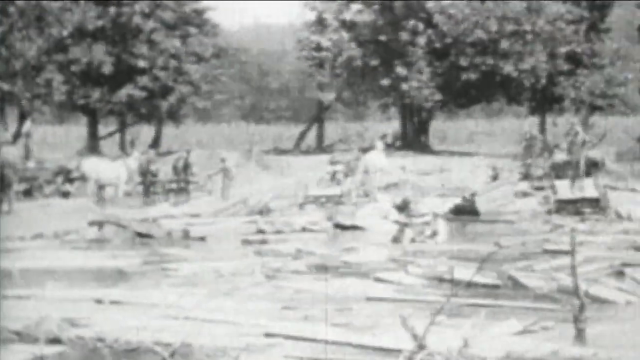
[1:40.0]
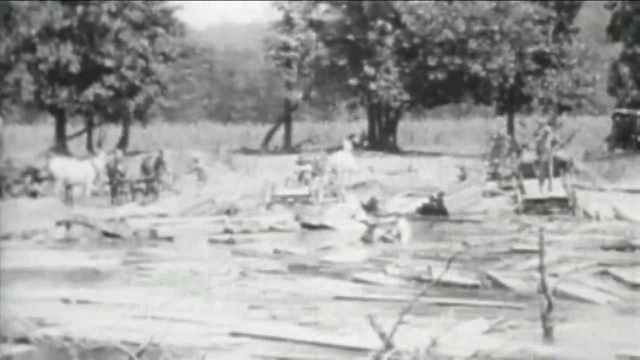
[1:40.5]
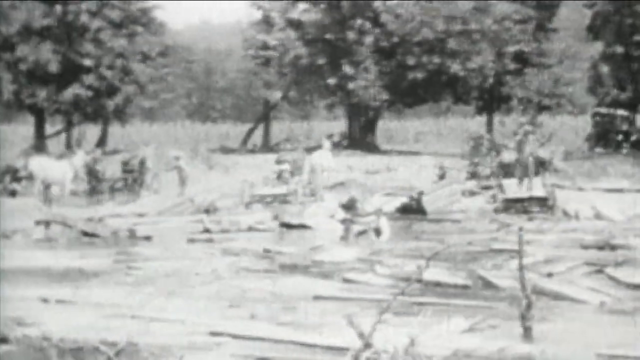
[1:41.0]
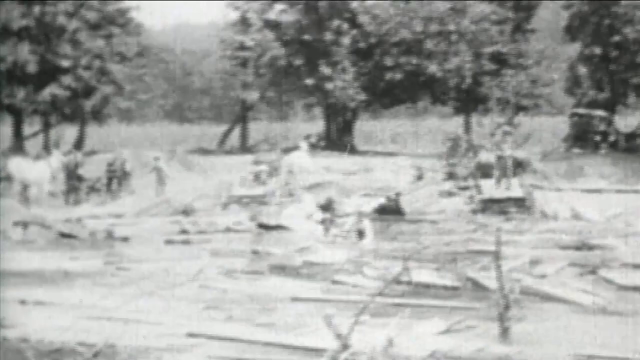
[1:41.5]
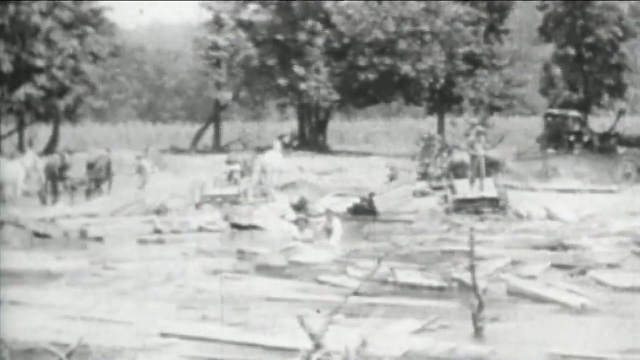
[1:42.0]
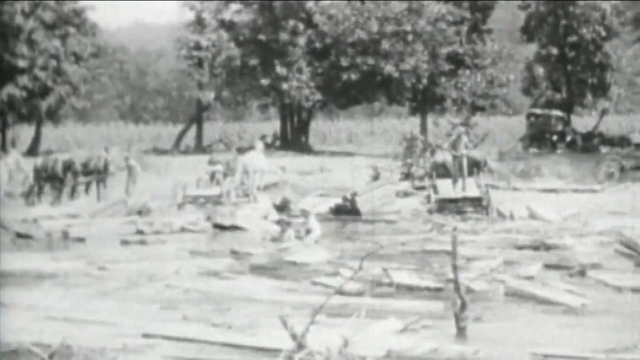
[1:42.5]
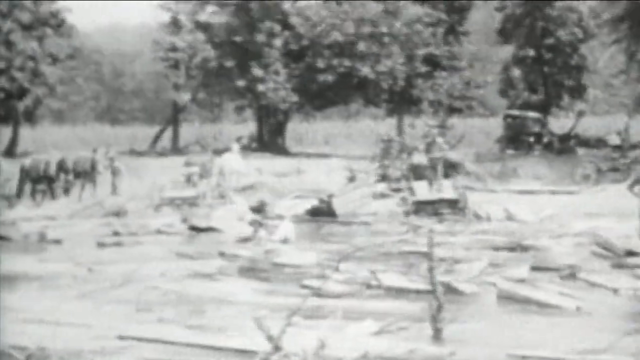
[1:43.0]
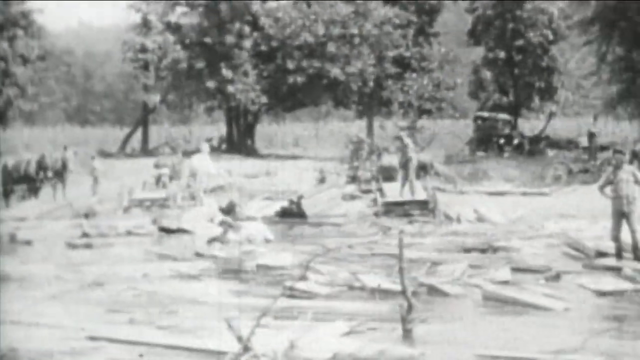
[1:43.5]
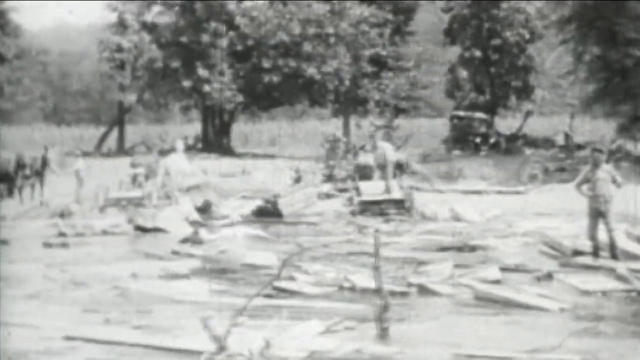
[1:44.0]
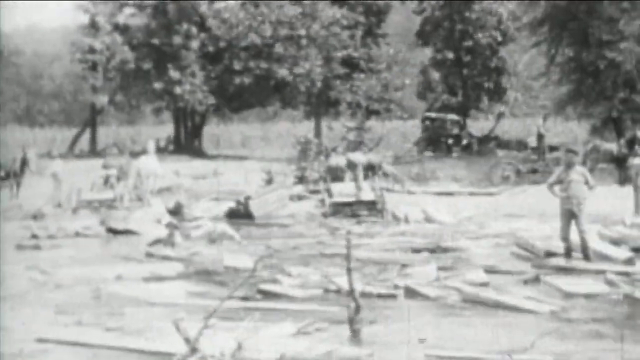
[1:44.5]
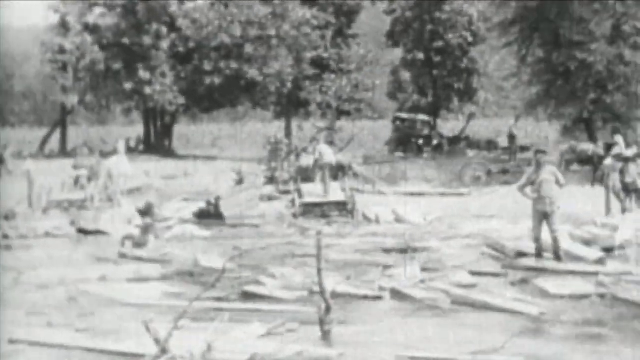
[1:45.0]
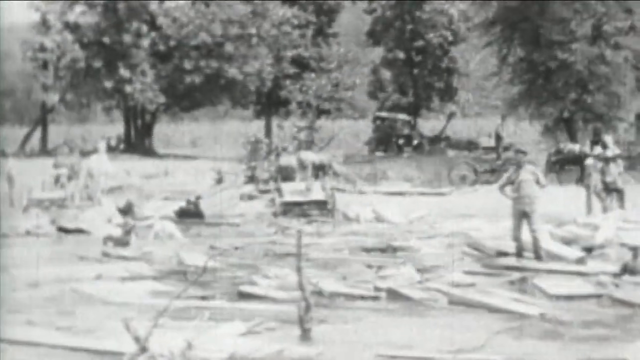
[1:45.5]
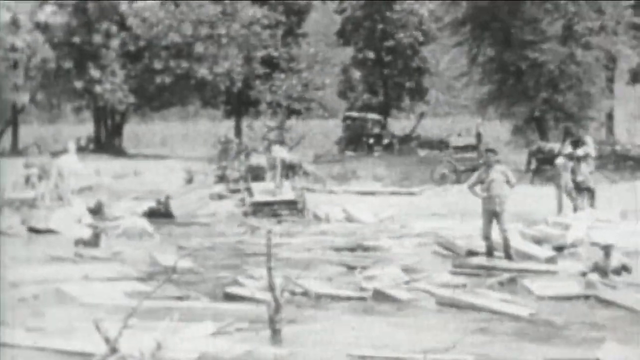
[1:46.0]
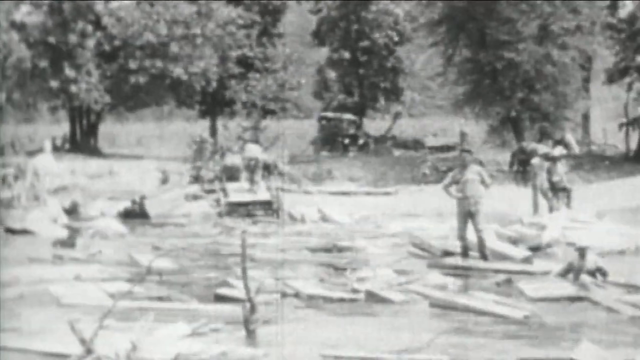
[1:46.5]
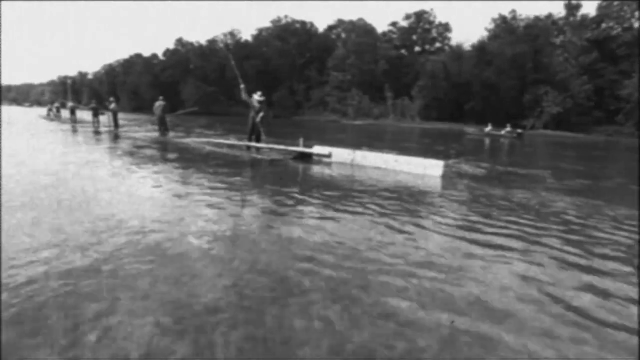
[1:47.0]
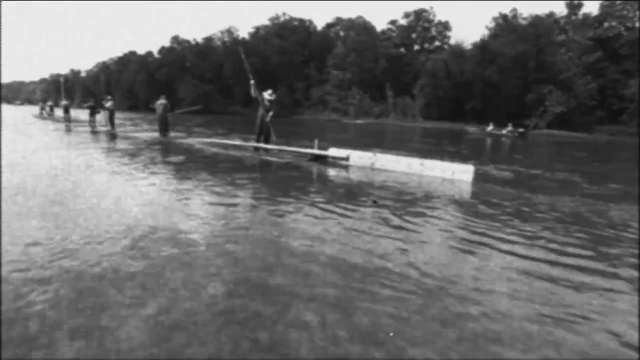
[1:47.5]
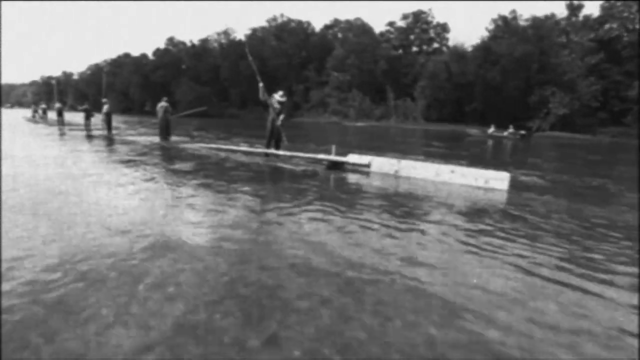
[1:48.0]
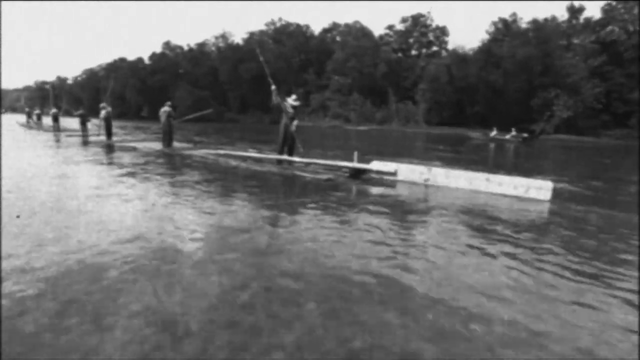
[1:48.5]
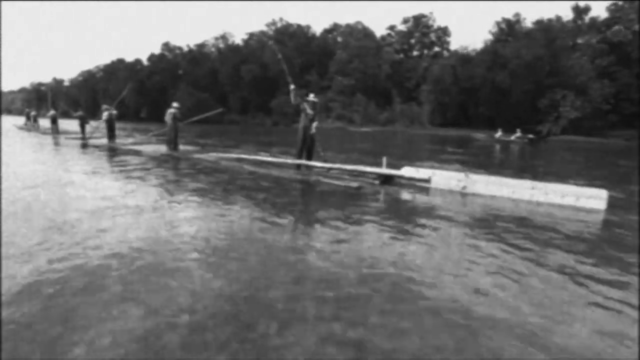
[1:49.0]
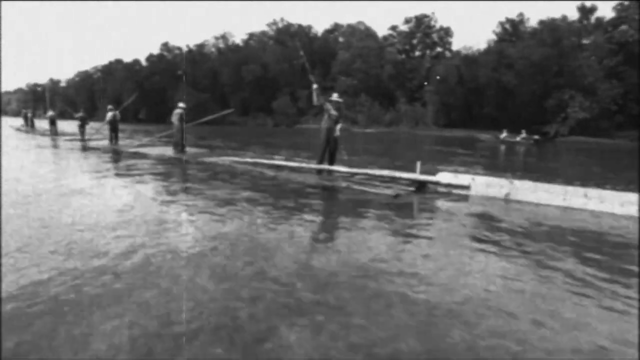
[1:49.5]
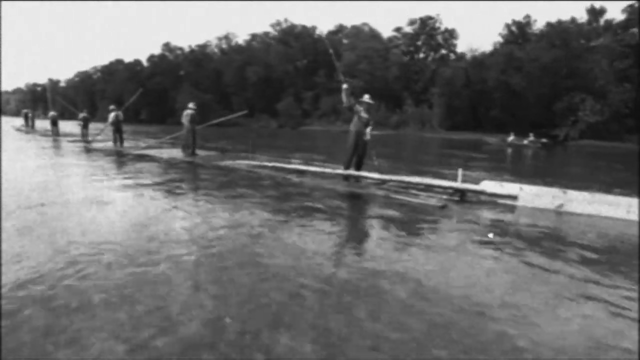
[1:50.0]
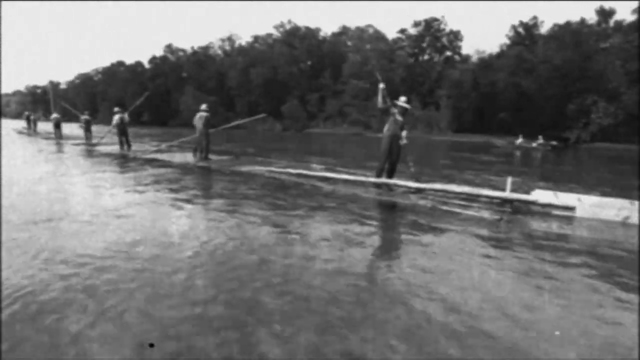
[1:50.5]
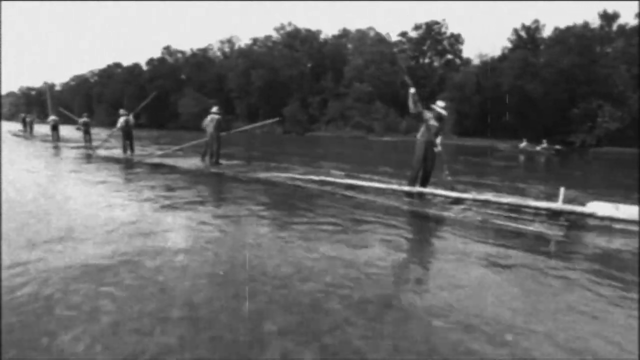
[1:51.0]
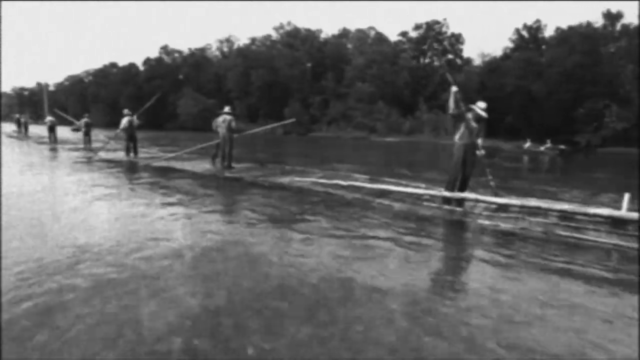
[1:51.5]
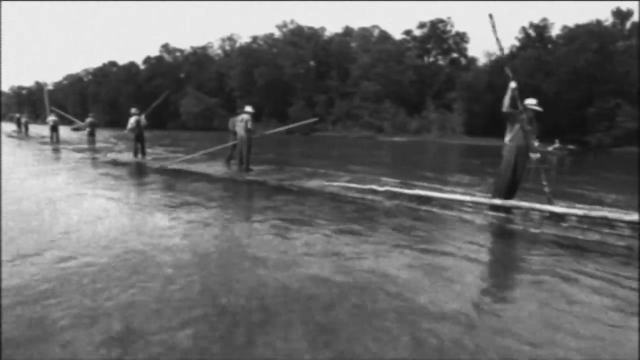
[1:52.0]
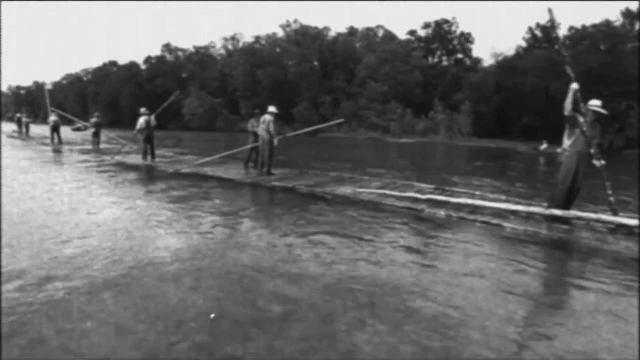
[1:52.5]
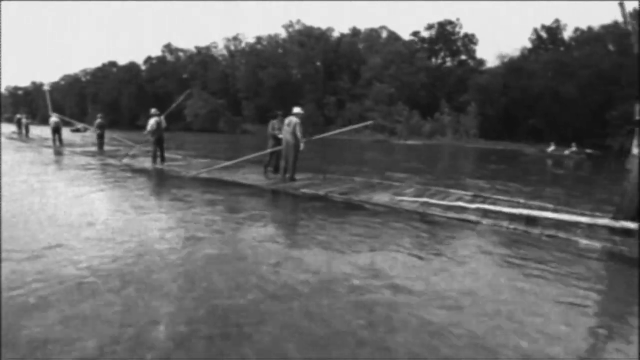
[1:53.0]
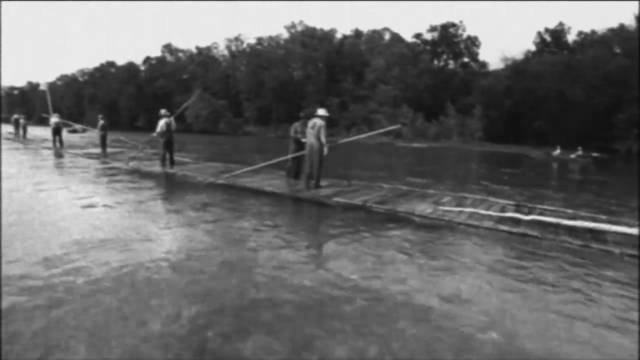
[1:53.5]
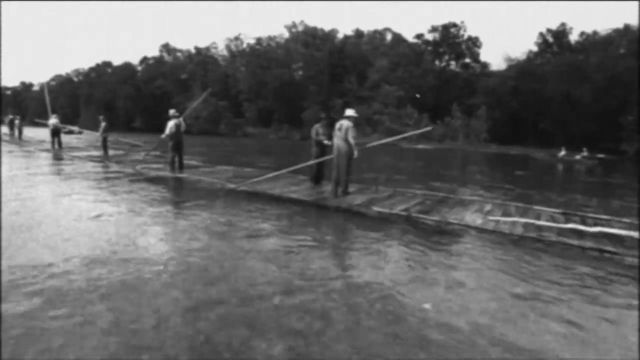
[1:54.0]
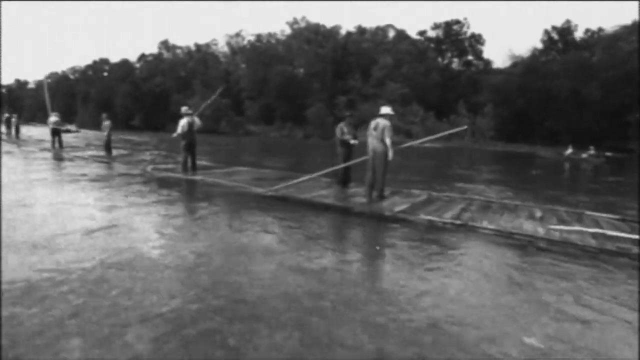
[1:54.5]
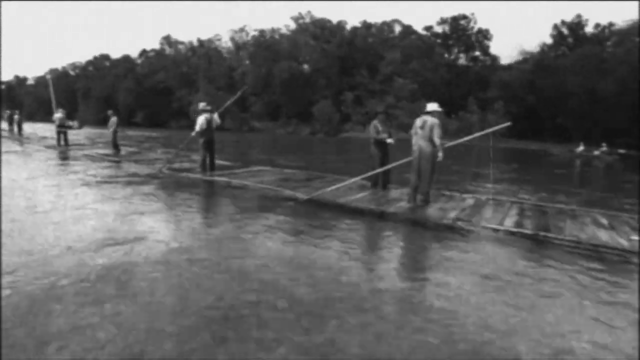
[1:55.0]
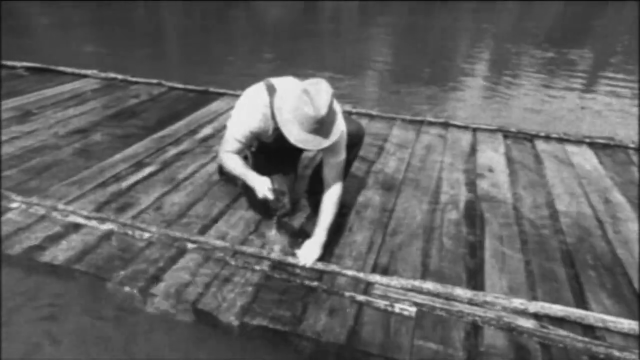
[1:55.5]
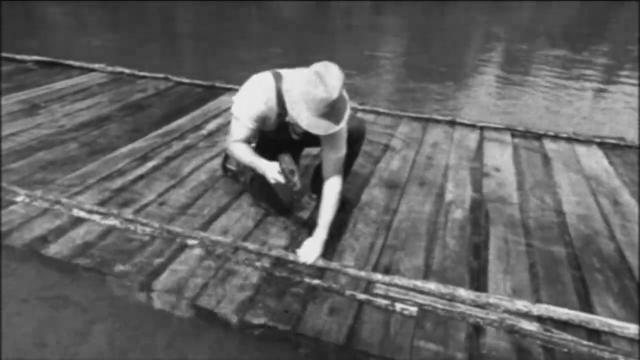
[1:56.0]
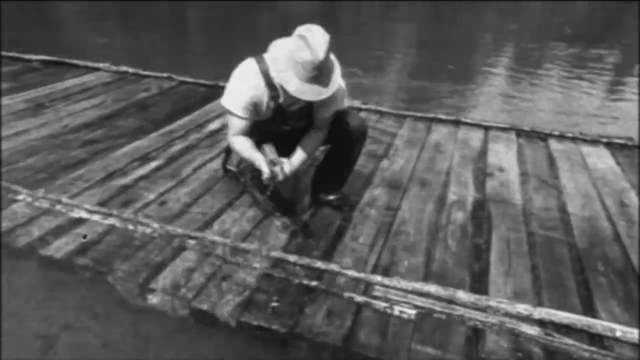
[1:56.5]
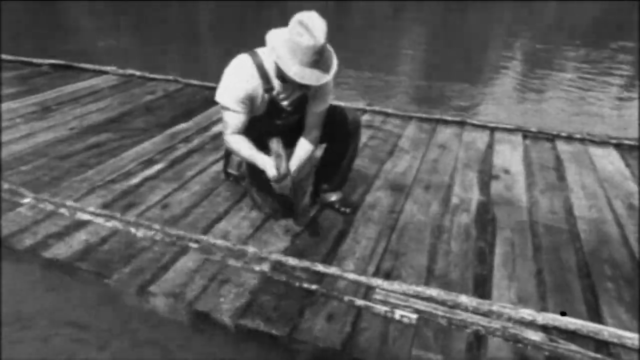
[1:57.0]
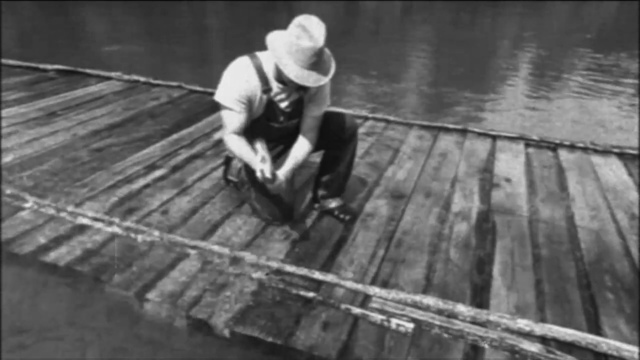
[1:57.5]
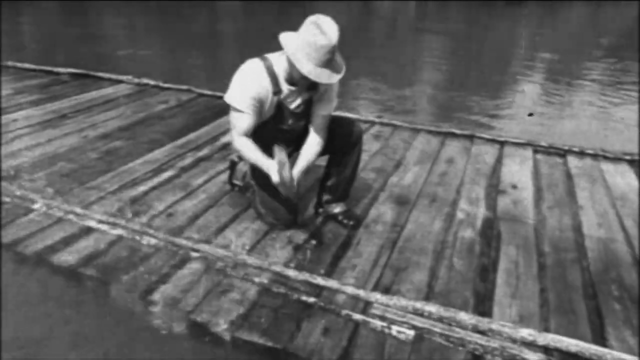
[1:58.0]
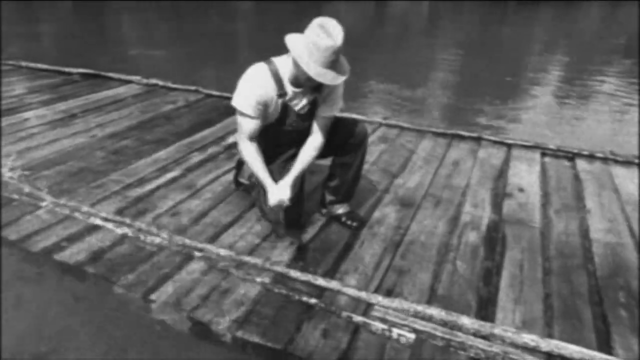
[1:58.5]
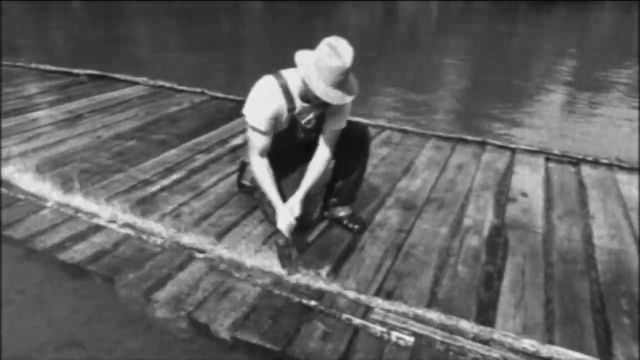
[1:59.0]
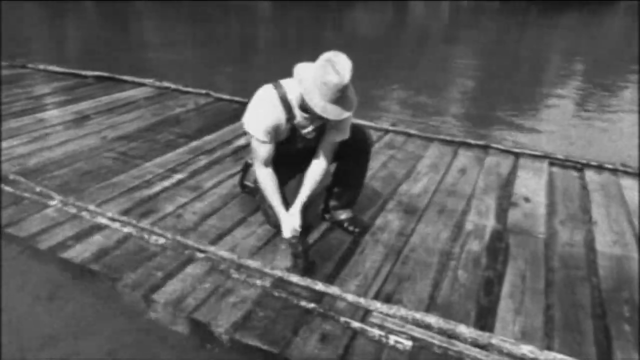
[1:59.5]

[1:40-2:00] Black-and-white footage shows logs in the river, which people appear to be grabbing out of the water. More of the river is shown, with men on top of some logs who look like they are building a bridge. They hammer down some of the wood, and it appears to be a wooden bridge being built over the water.